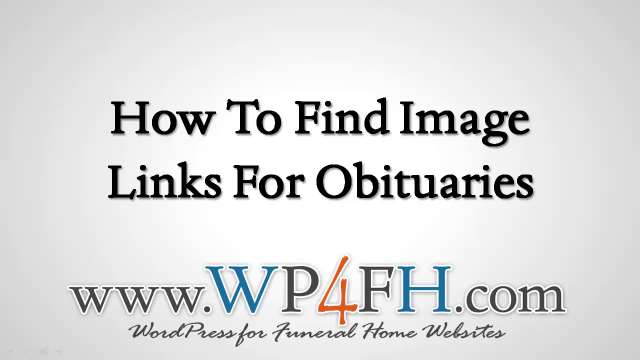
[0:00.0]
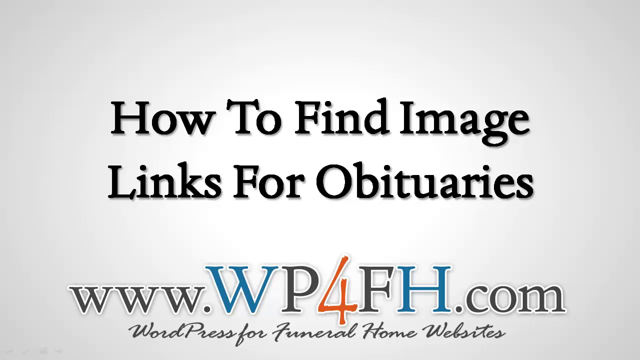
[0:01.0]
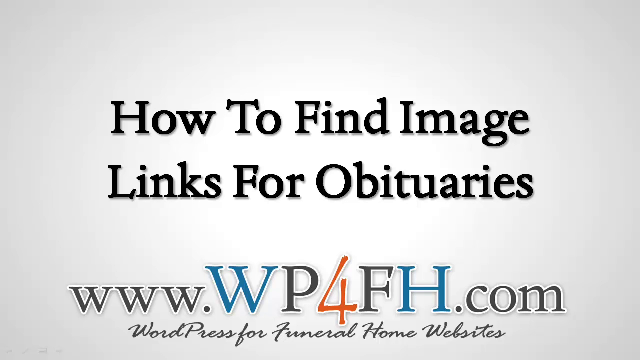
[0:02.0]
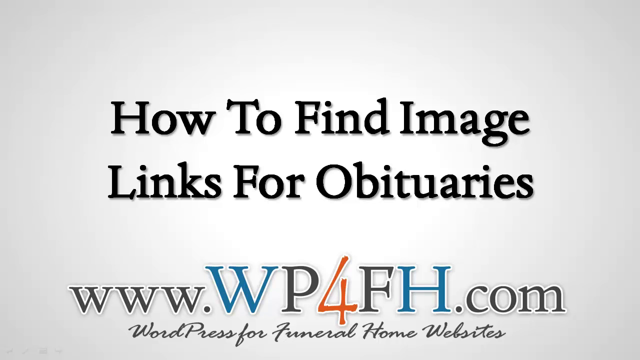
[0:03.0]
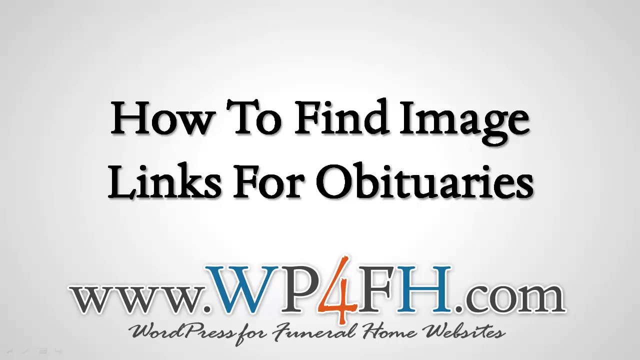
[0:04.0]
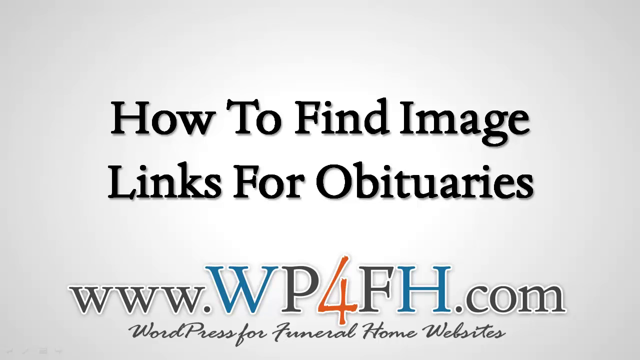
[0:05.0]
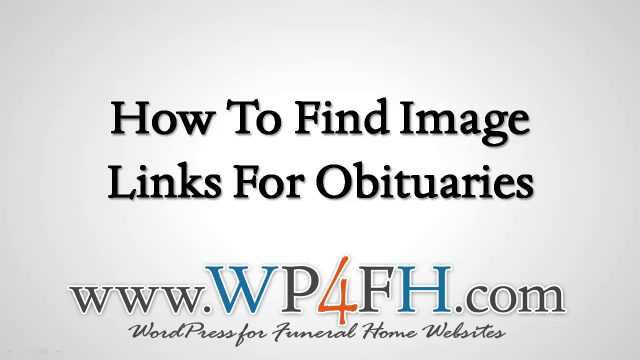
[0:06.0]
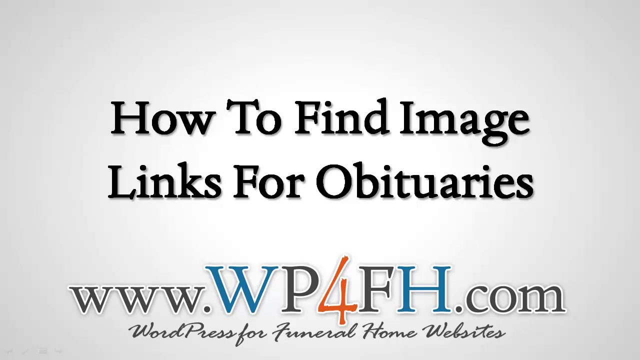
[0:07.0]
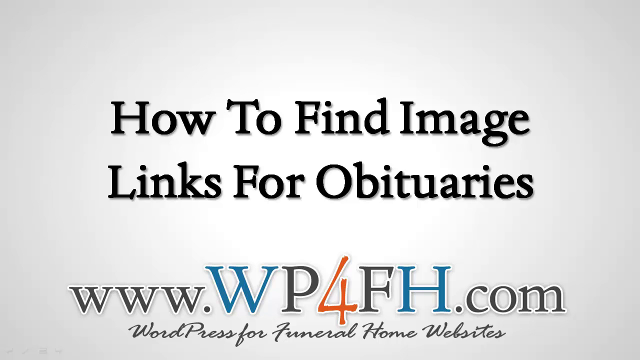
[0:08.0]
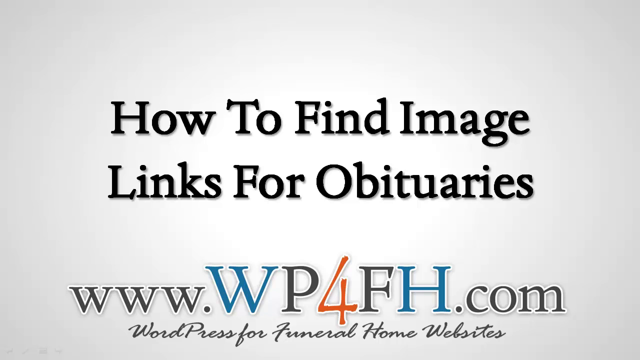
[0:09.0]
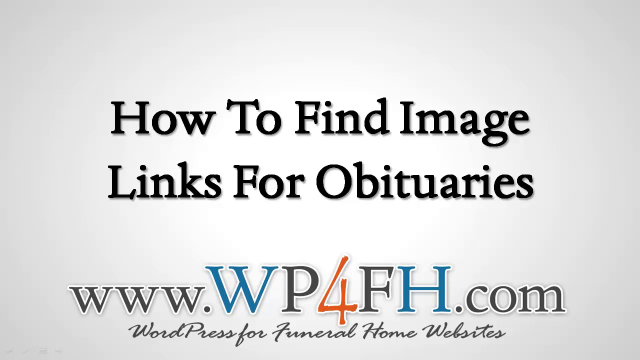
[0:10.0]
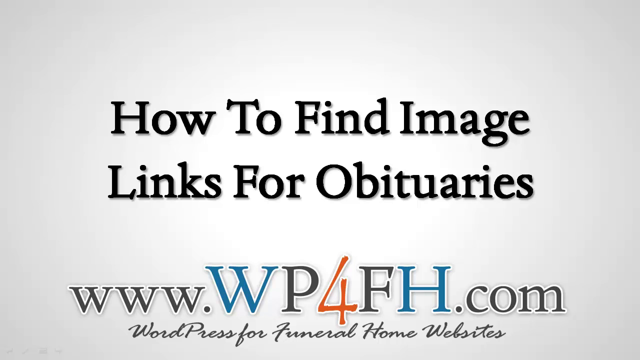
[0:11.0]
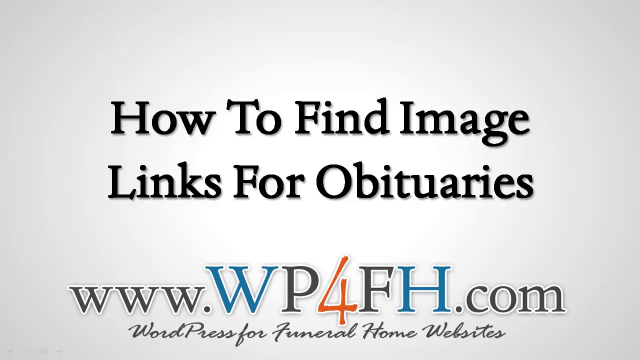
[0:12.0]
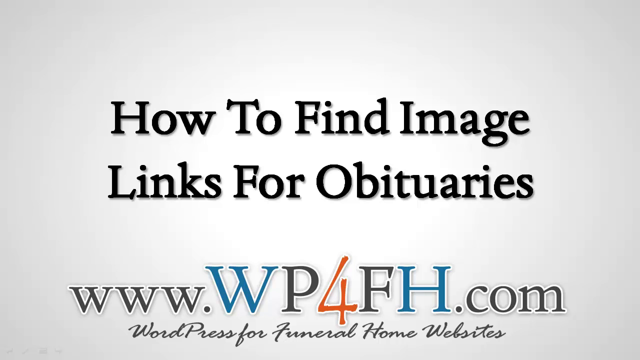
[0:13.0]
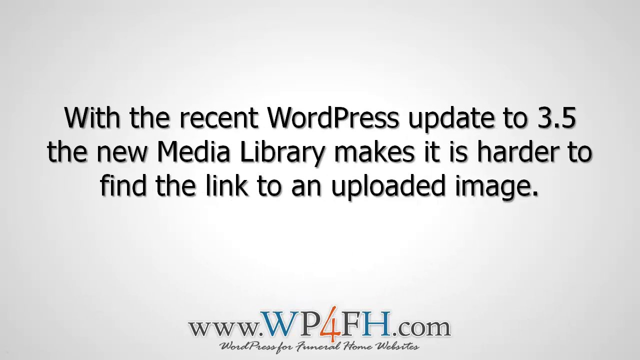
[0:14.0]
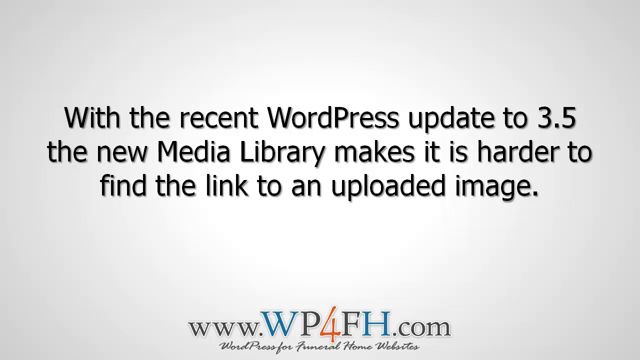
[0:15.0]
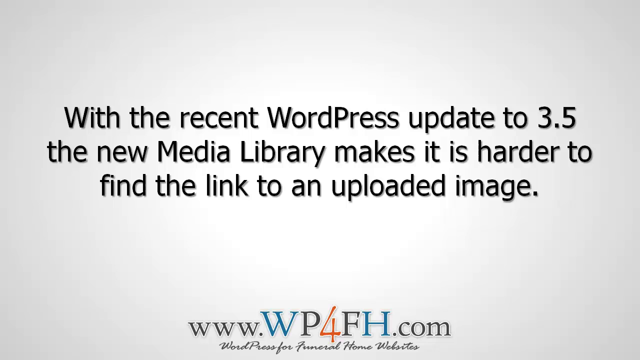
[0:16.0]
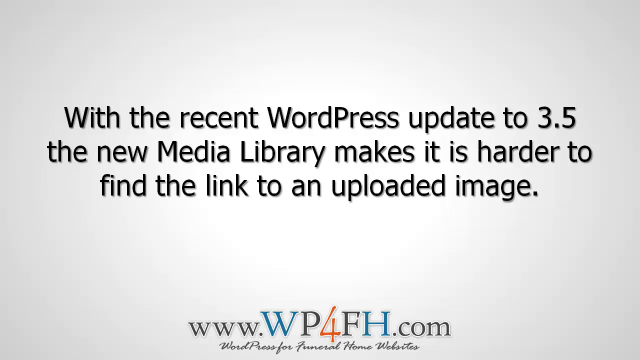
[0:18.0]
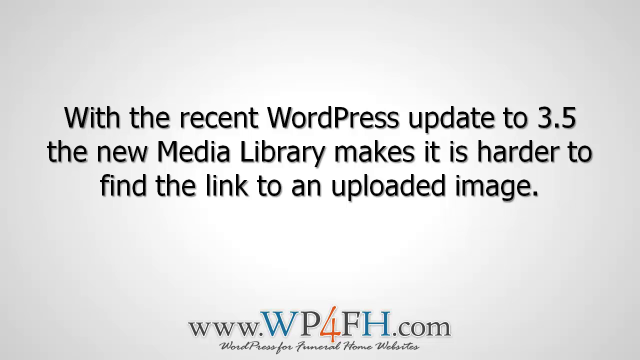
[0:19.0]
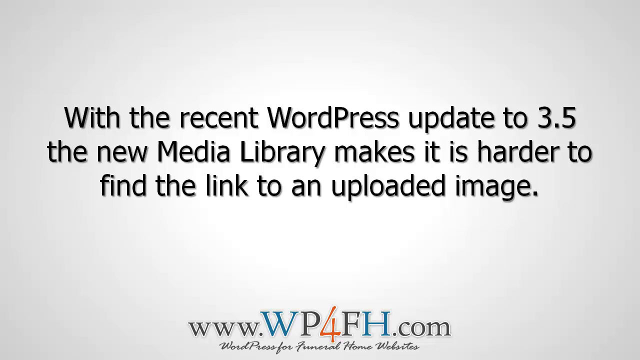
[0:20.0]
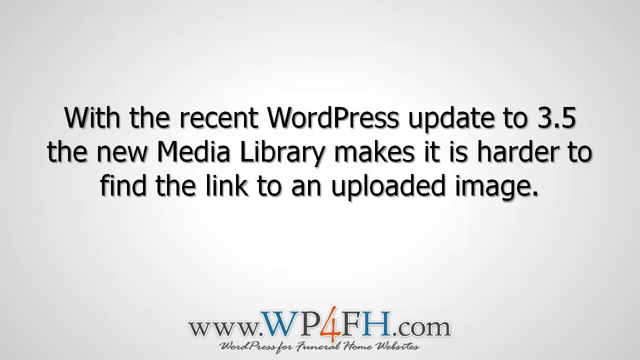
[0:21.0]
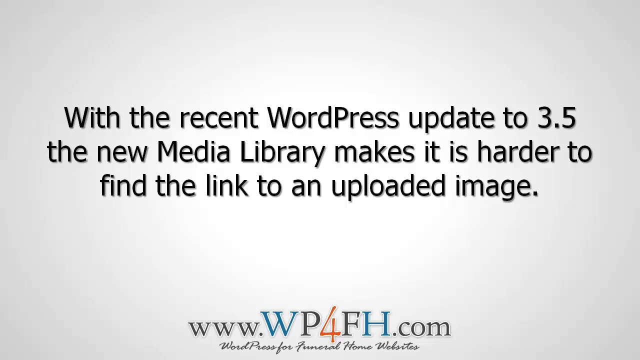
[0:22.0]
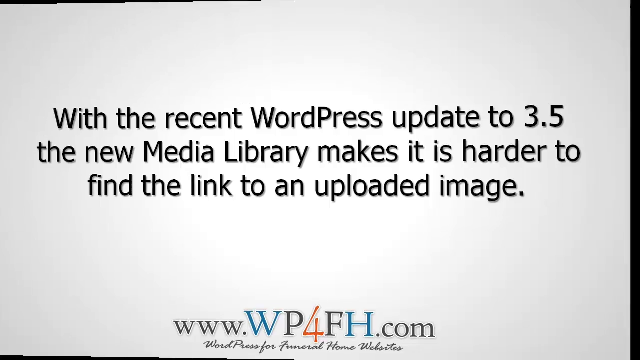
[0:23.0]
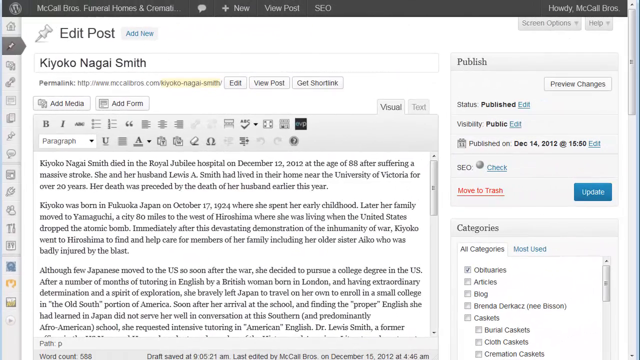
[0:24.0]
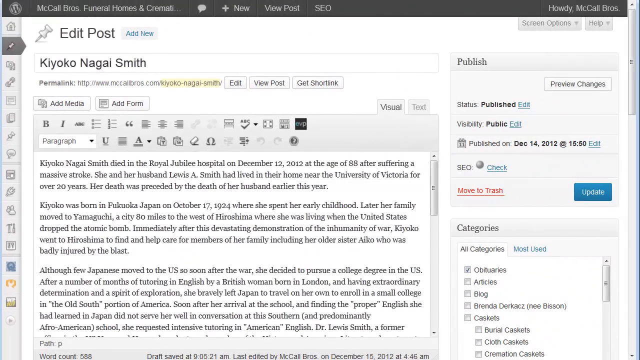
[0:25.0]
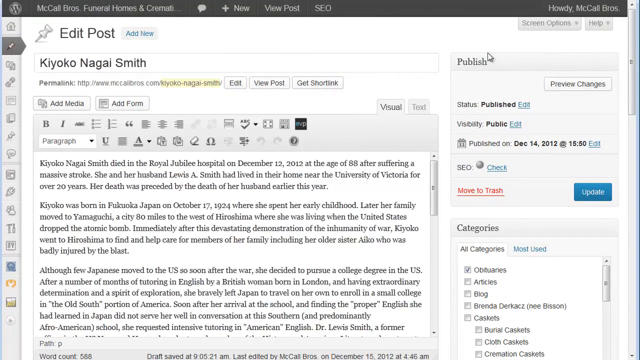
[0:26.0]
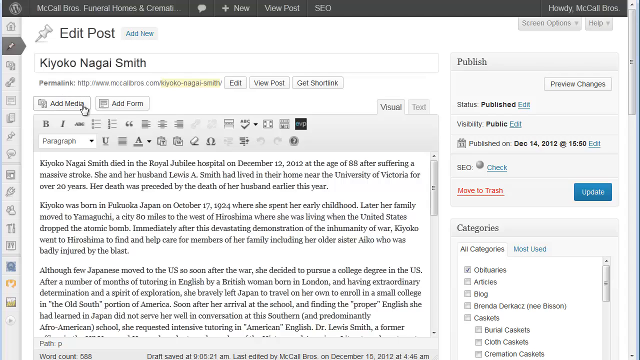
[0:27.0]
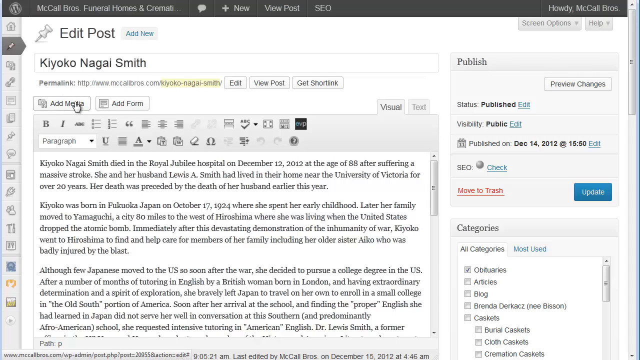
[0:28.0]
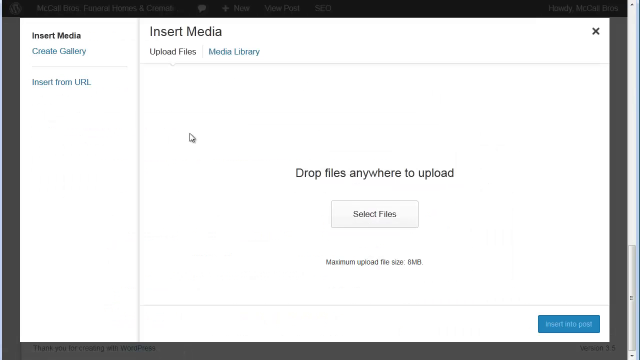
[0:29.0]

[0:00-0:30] The video concerns a website for funeral homes that is used to make obituaries and to find image links for pictures to use in them. There are different styles, texts and images available for an obituary.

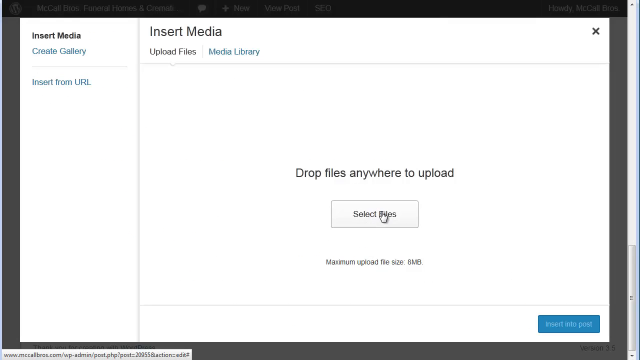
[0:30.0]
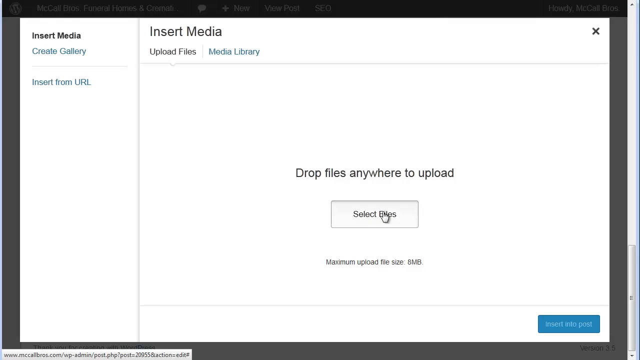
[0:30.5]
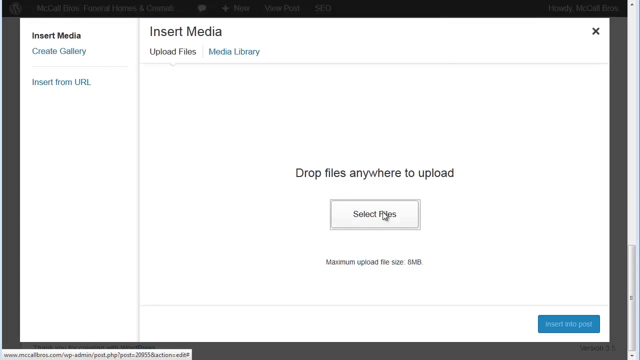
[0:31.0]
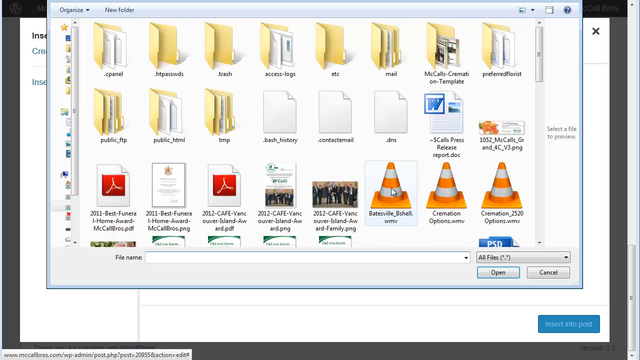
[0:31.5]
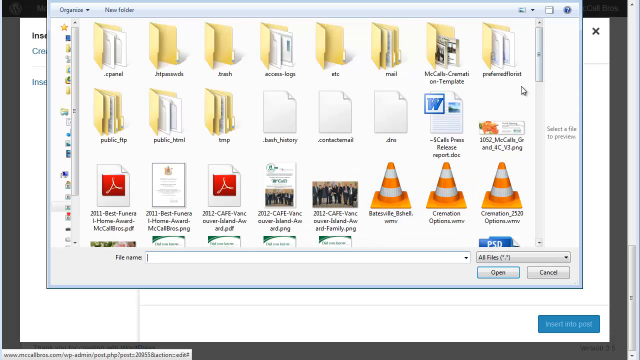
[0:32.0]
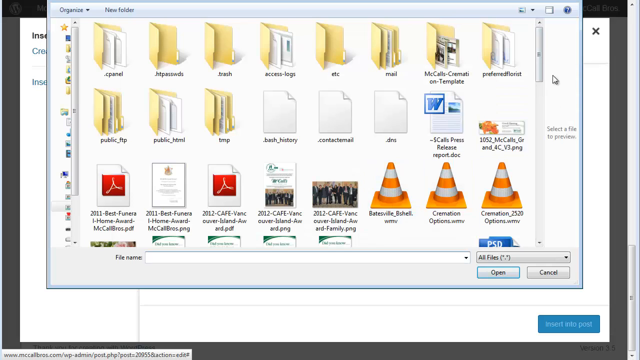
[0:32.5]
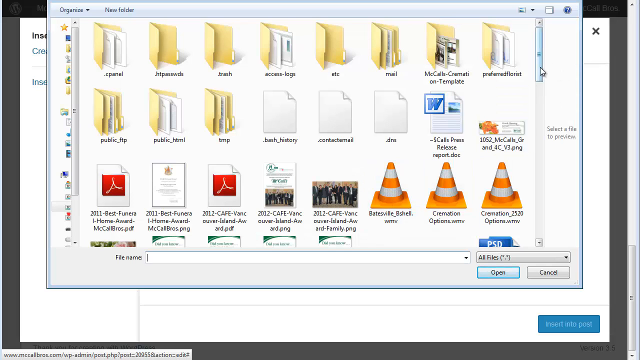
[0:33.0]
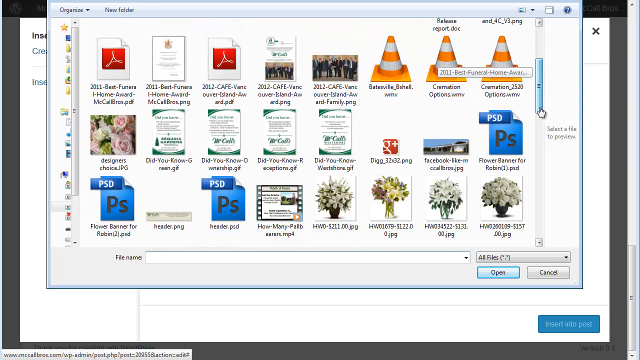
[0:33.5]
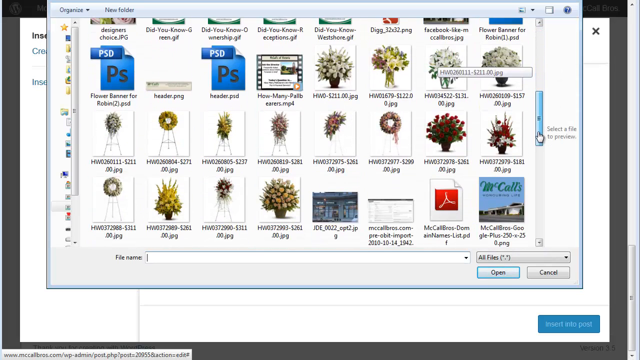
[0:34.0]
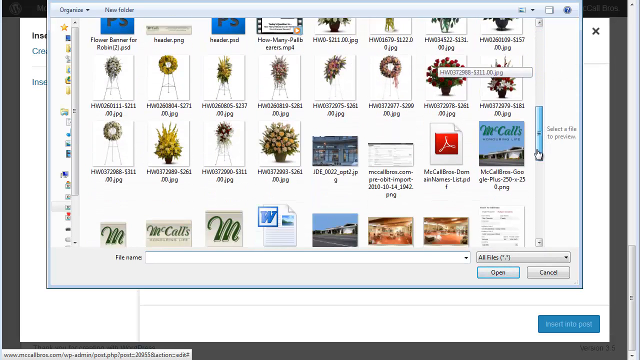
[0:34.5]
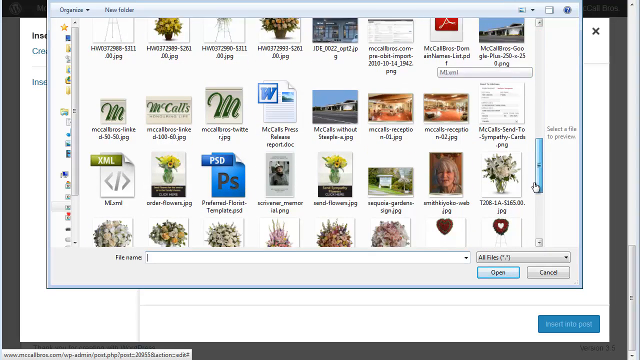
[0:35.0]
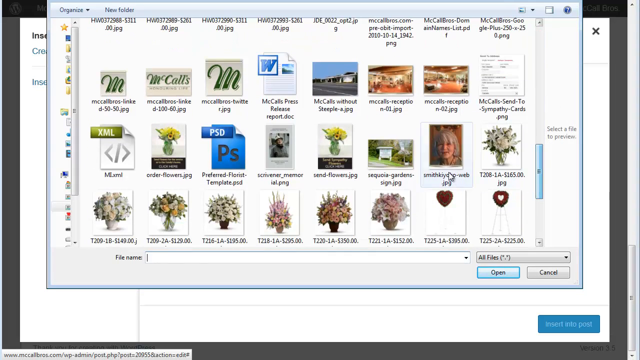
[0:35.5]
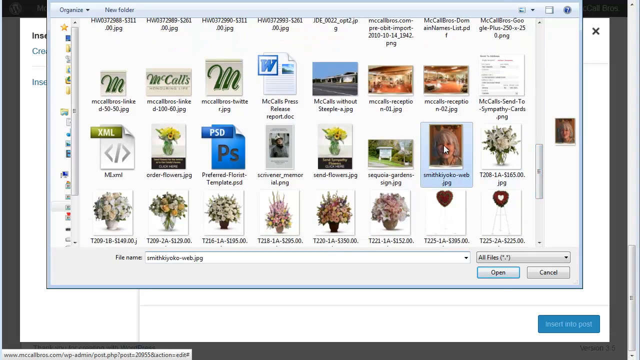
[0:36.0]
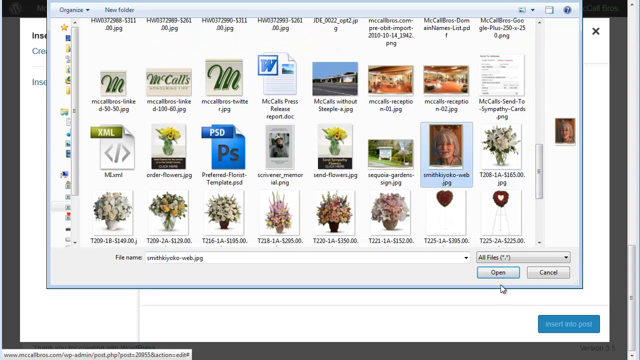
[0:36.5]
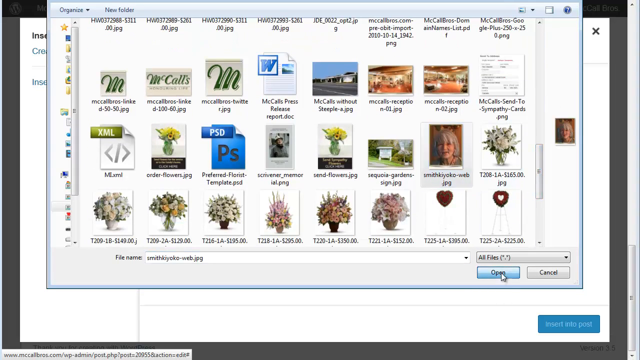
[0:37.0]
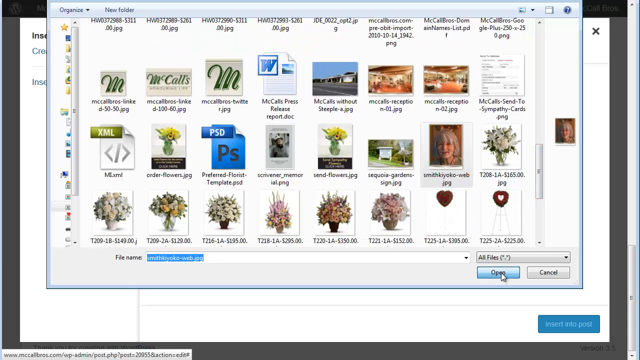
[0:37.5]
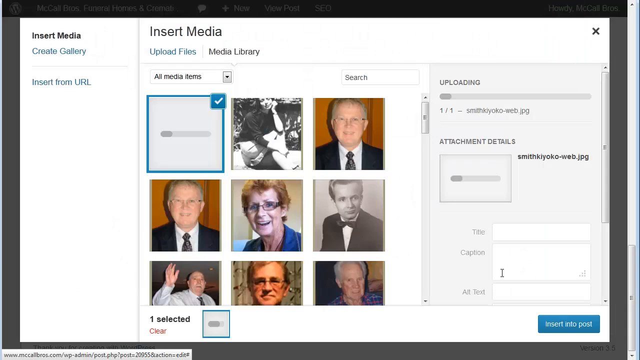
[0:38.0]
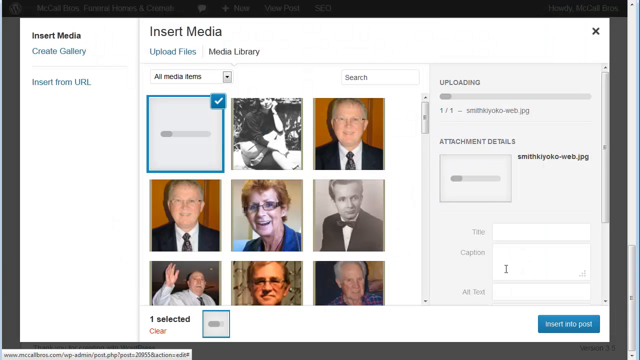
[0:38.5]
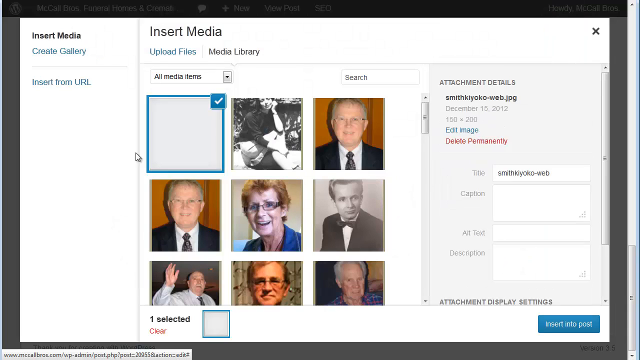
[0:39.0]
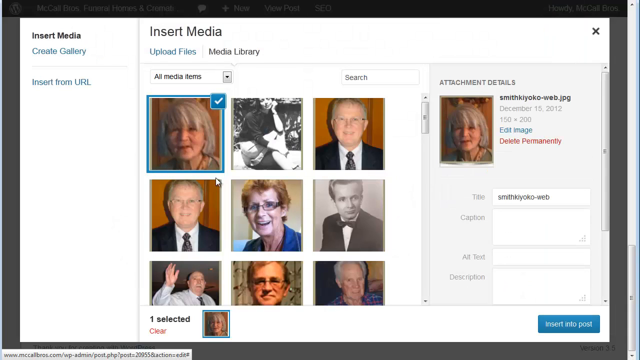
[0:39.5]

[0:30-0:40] The WordPress for Funeral Homes website is featured, which is used to insert pictures of the person an obituary is being created for, through its media section, along with text in different sizes and fonts. It looks colorful.